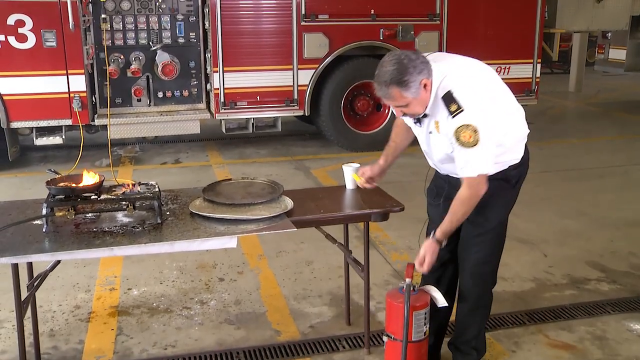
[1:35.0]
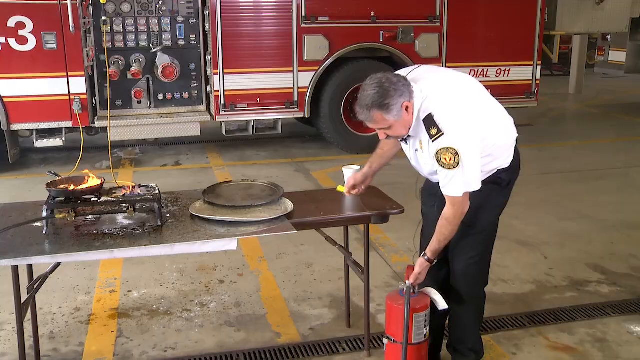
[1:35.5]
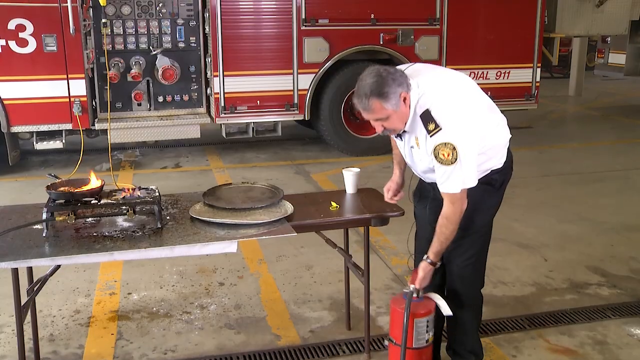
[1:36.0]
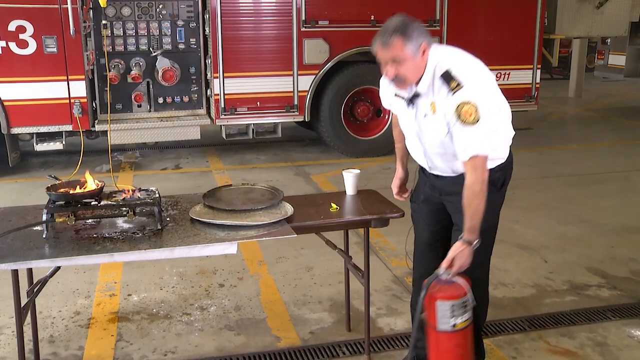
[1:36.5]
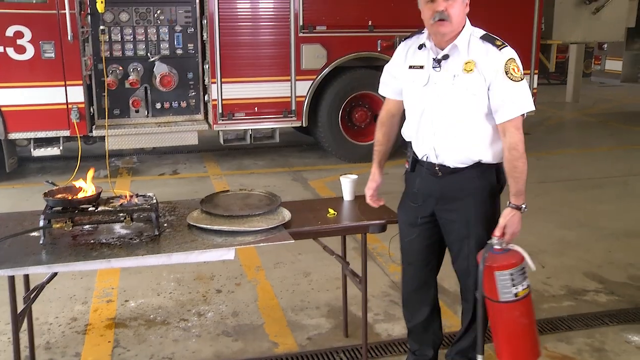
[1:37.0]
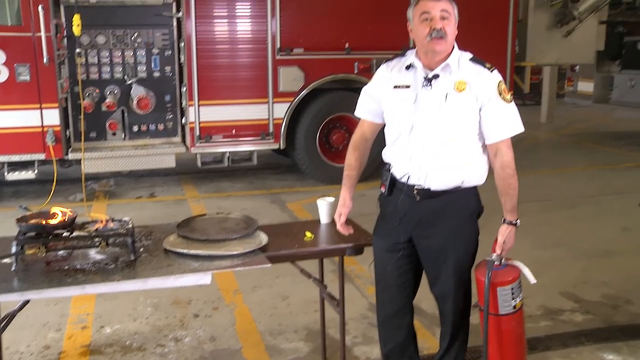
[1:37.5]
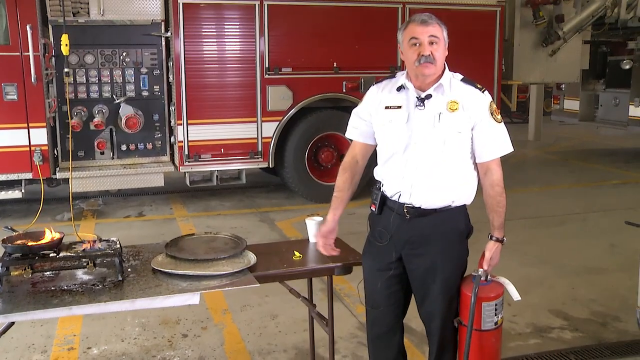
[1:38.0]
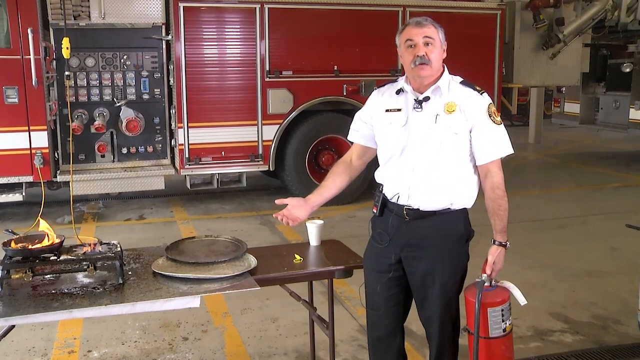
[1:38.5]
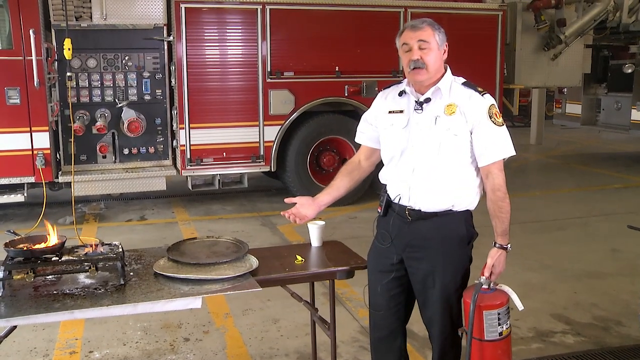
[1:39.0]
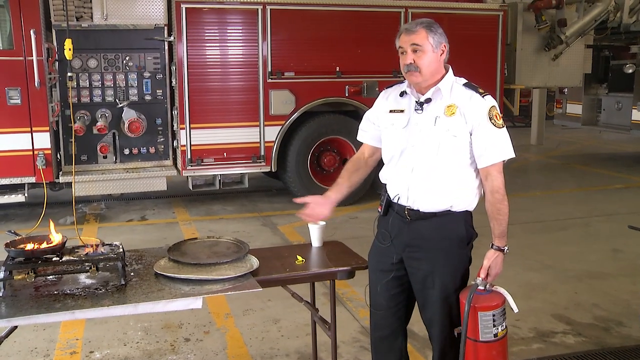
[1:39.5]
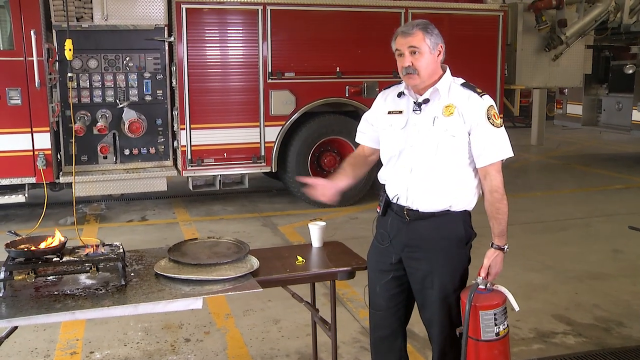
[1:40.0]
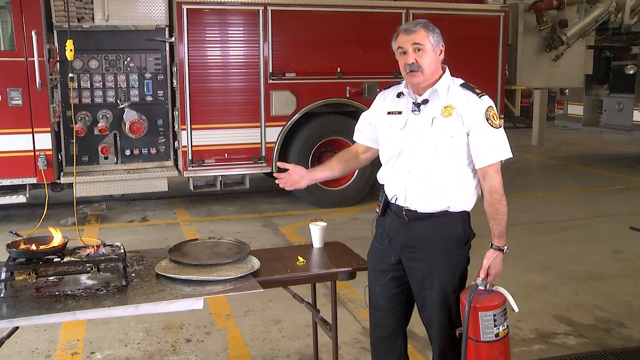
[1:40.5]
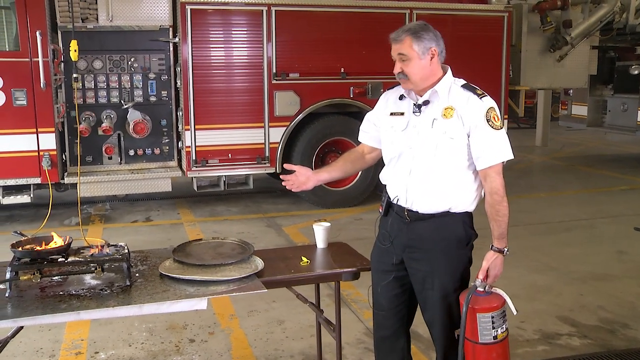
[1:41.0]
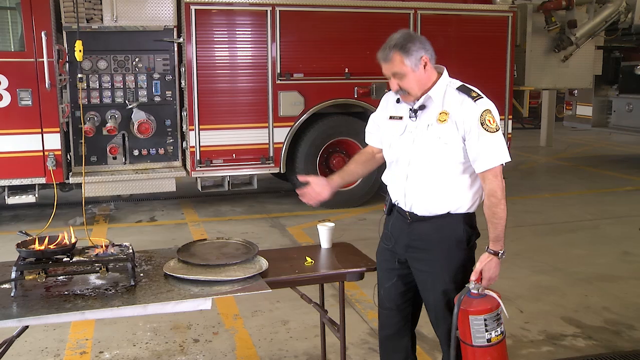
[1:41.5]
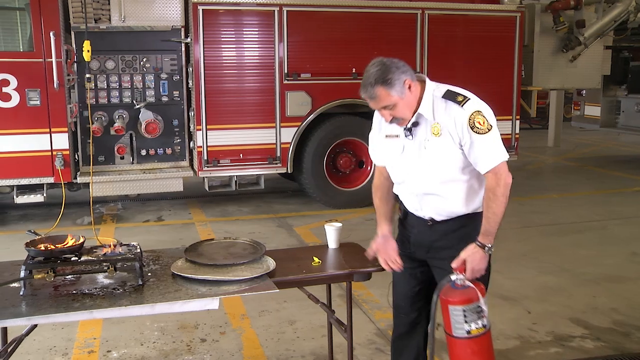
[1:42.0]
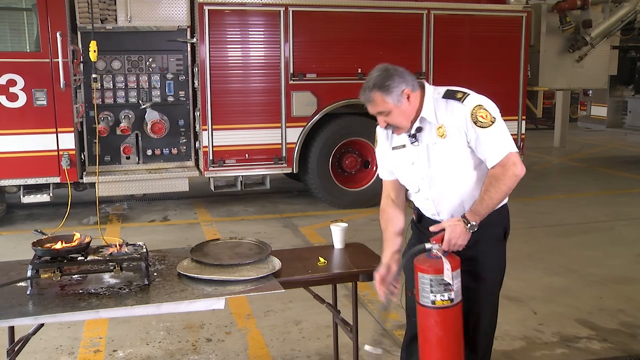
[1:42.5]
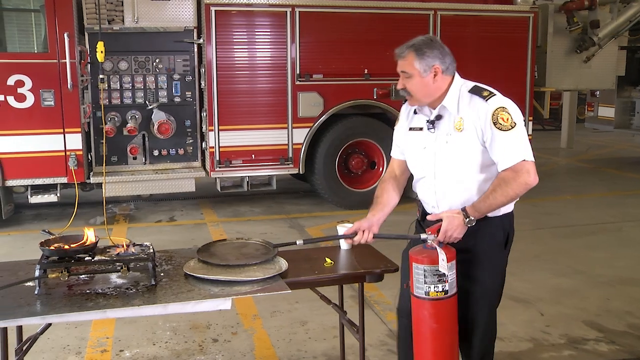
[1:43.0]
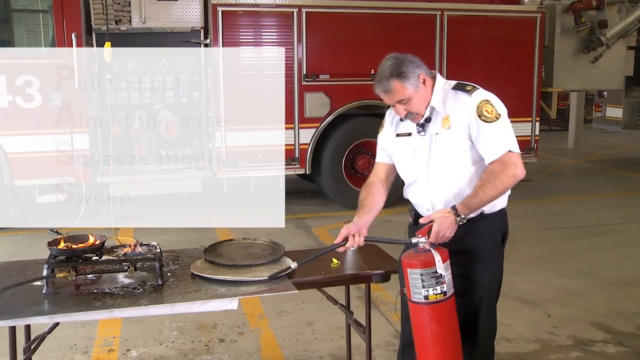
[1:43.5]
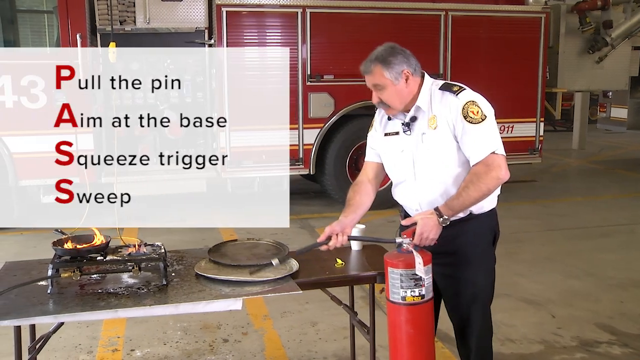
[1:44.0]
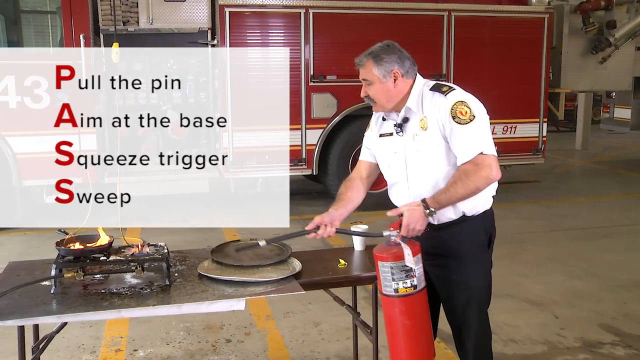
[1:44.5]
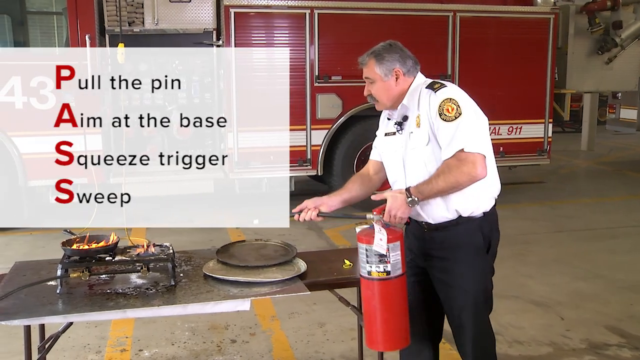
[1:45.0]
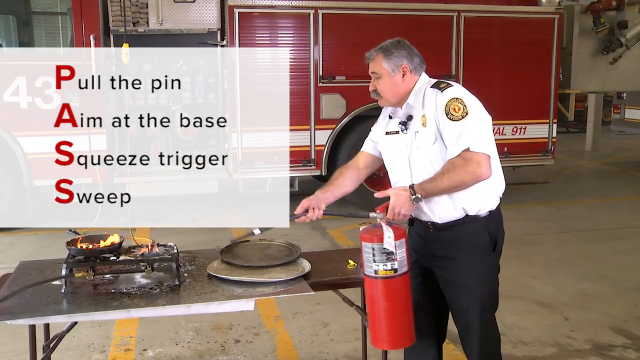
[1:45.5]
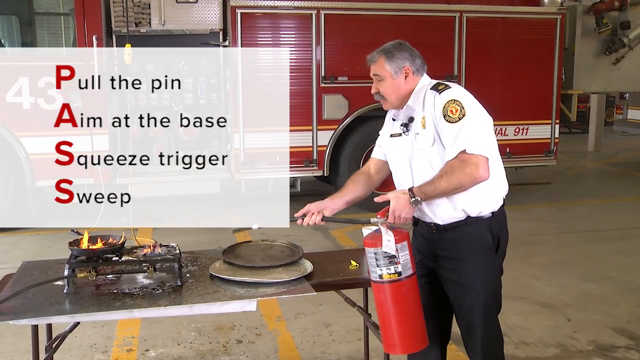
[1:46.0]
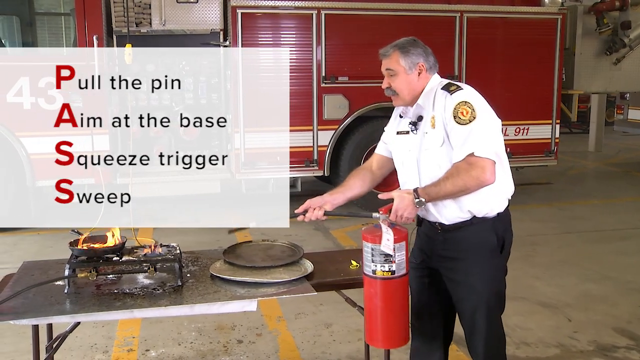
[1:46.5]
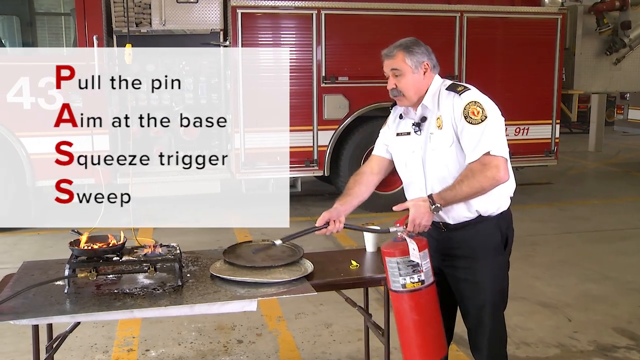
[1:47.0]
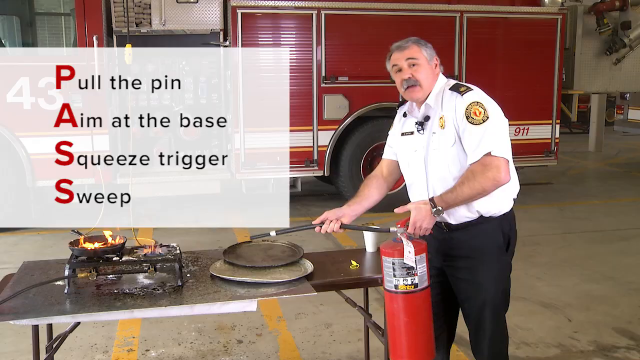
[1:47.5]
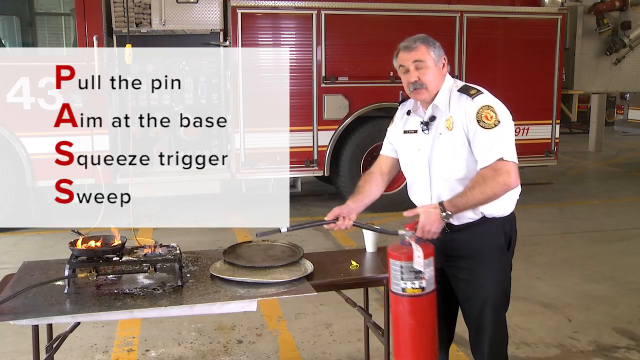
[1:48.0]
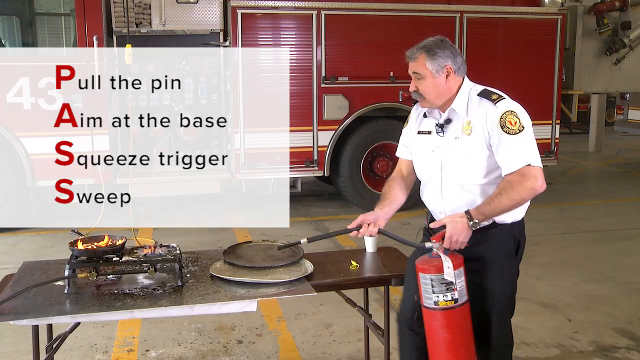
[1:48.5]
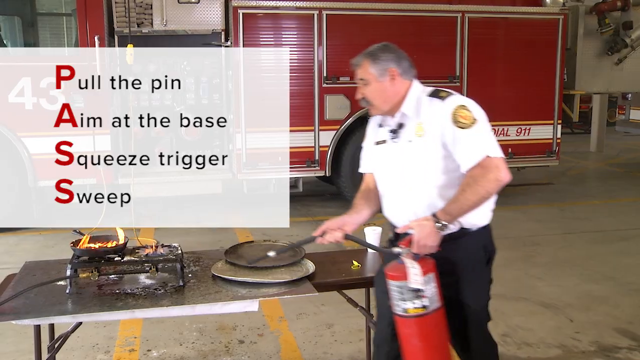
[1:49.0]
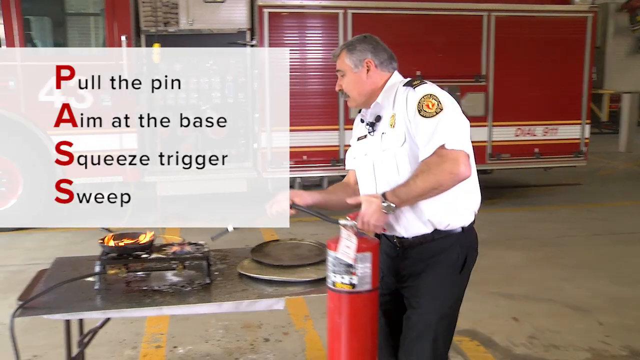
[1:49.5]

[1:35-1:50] The acronym PASS, P-A-S-S, is outlined: P for pull the pin, A for aim at the base, S for squeeze the trigger, and S for sweep. The instructor demonstrates by aiming and sweeping his hand back and forth. He then gets a little closer and starts to aim down, but nothing has been activated and the fire is not put out.